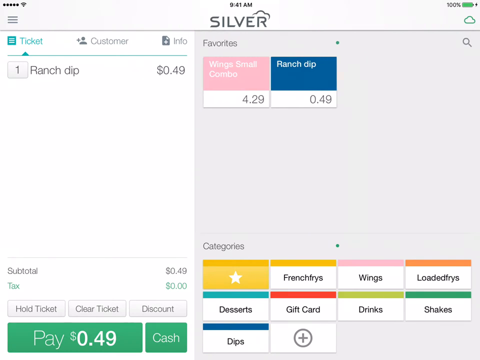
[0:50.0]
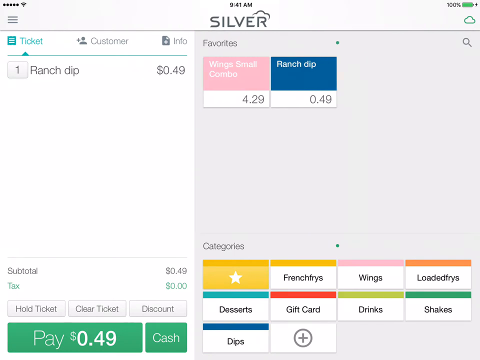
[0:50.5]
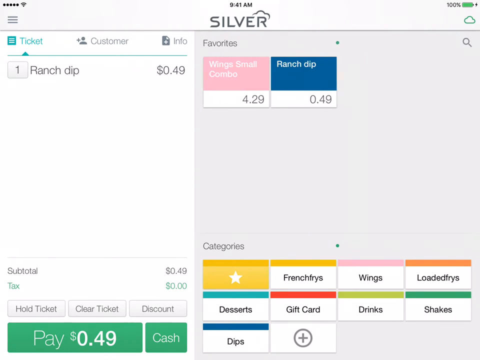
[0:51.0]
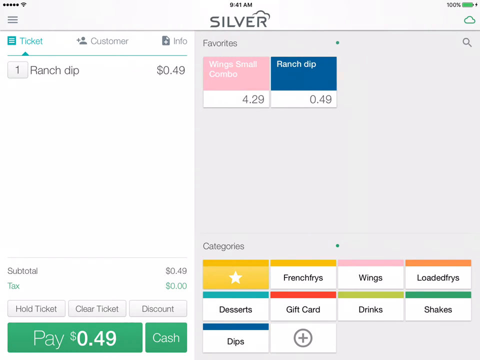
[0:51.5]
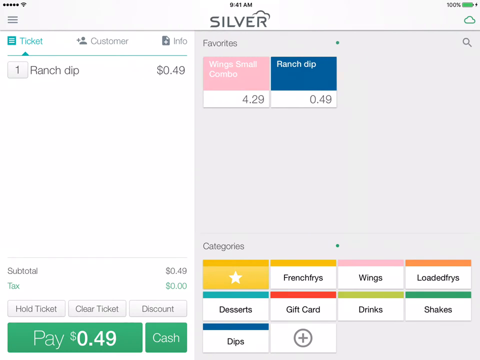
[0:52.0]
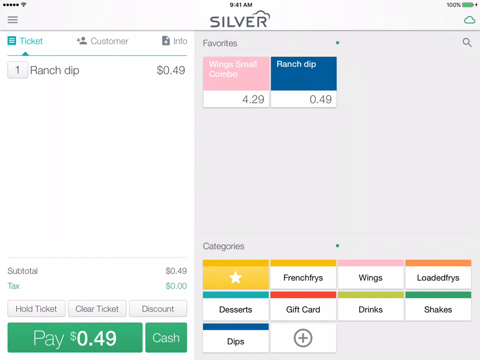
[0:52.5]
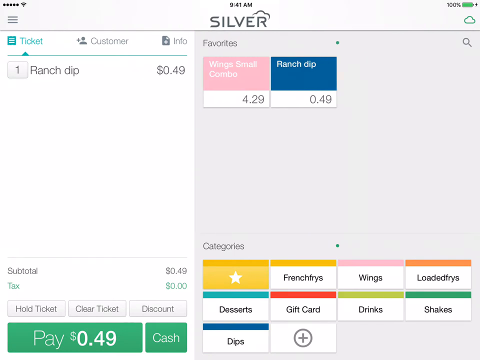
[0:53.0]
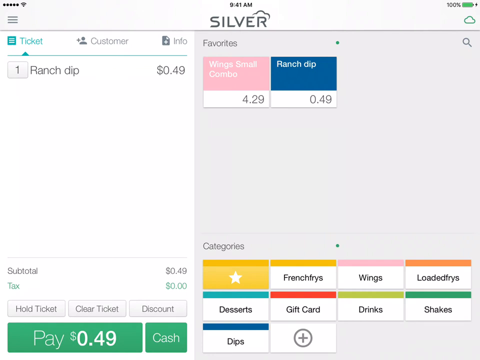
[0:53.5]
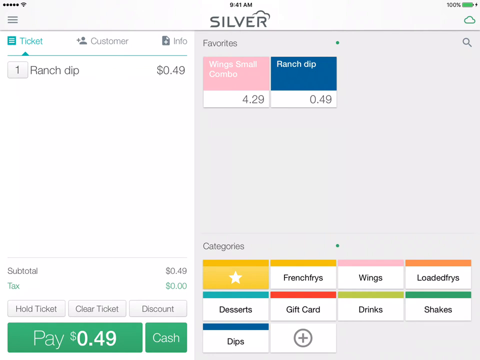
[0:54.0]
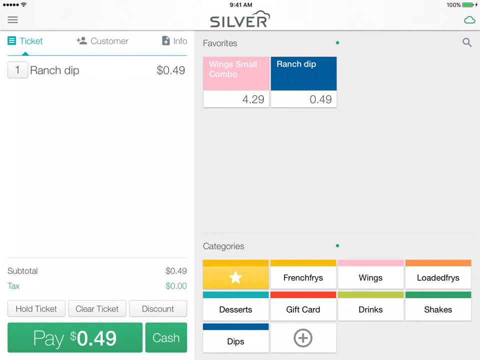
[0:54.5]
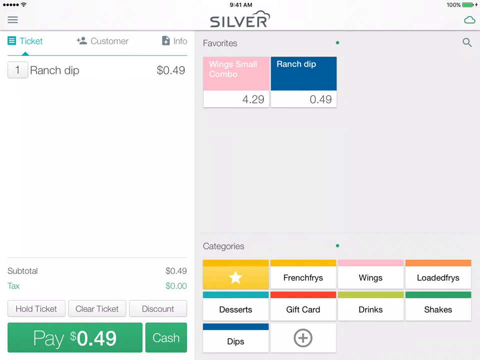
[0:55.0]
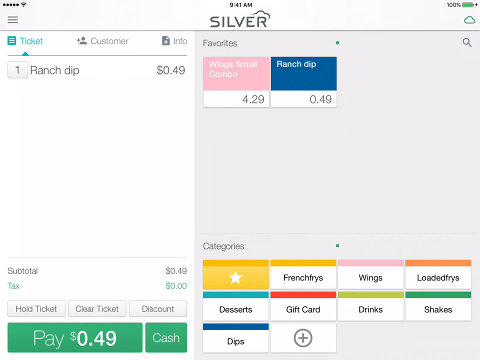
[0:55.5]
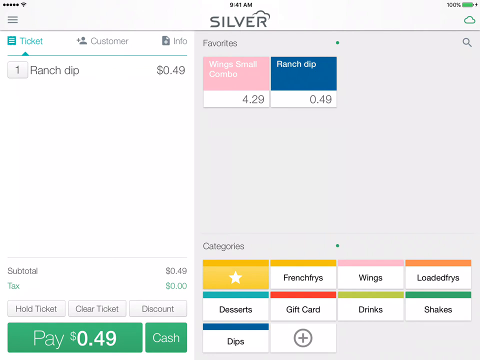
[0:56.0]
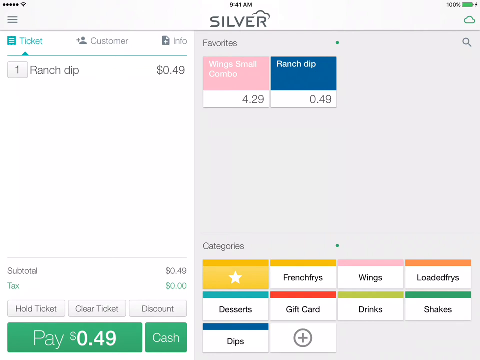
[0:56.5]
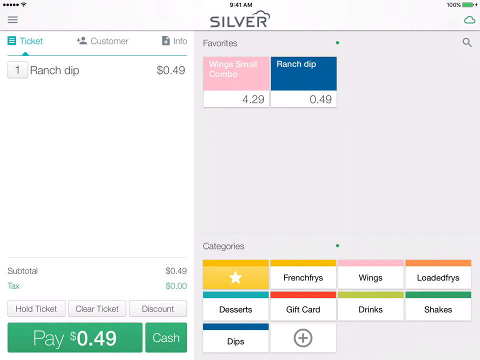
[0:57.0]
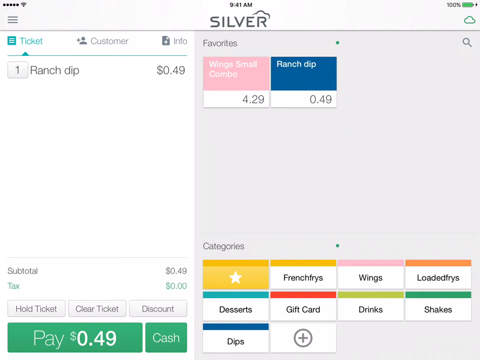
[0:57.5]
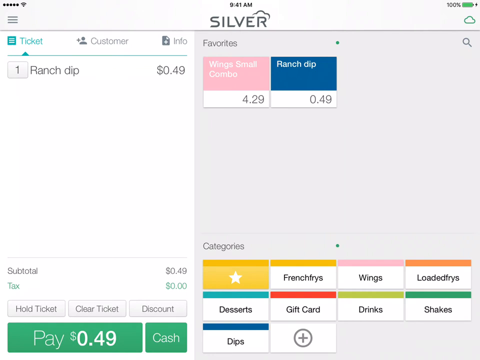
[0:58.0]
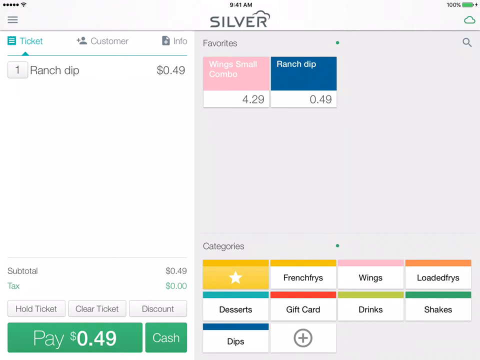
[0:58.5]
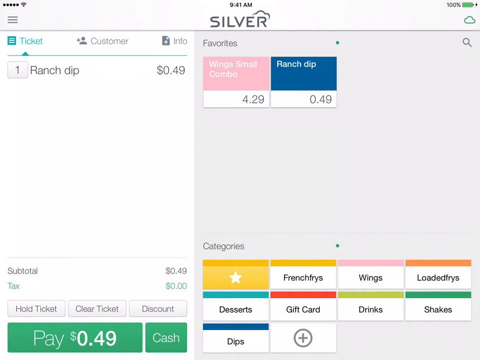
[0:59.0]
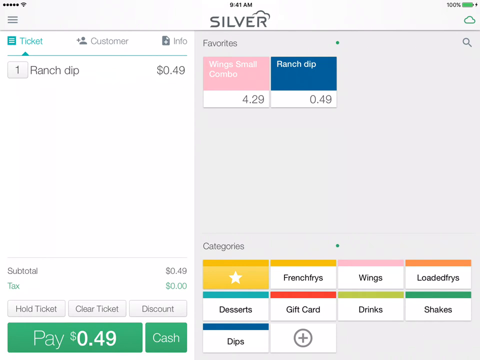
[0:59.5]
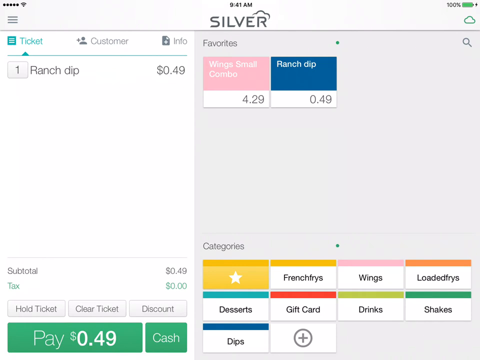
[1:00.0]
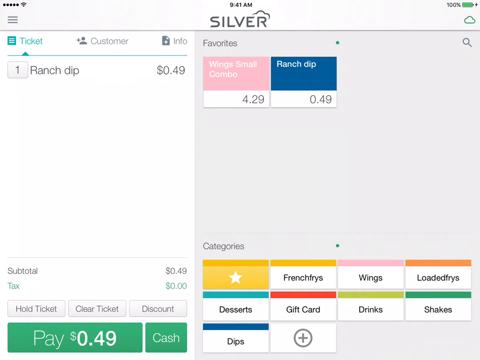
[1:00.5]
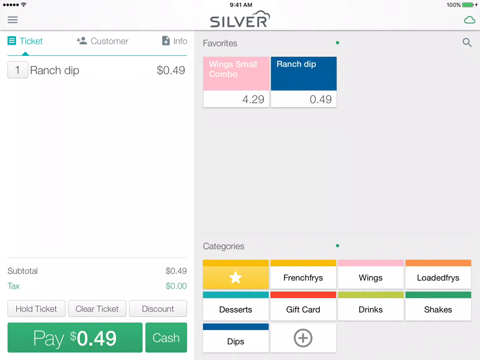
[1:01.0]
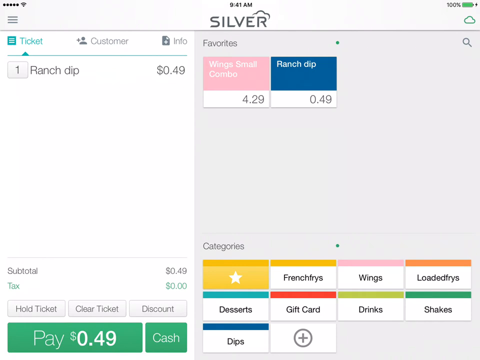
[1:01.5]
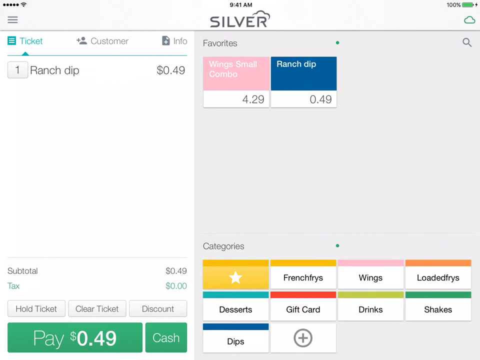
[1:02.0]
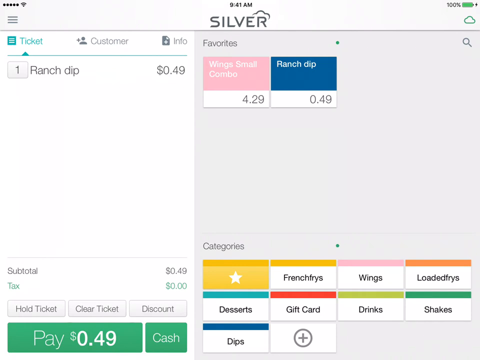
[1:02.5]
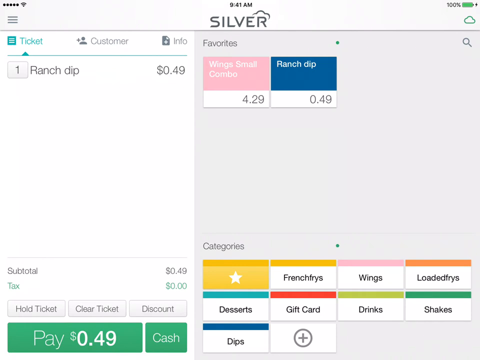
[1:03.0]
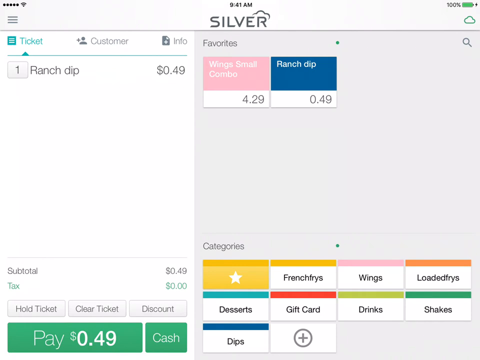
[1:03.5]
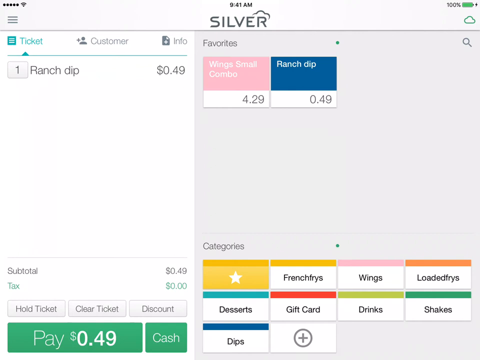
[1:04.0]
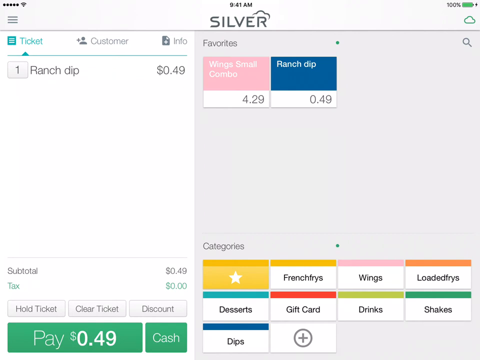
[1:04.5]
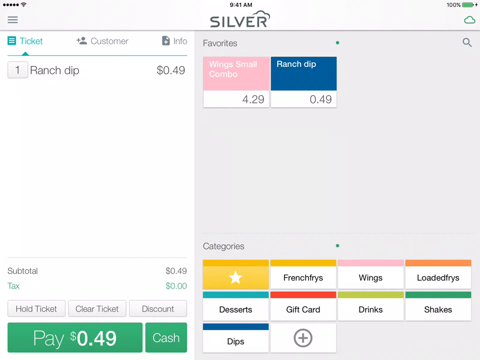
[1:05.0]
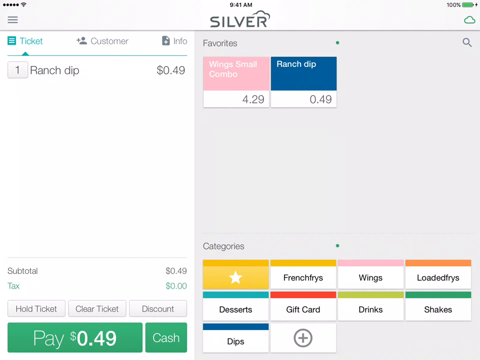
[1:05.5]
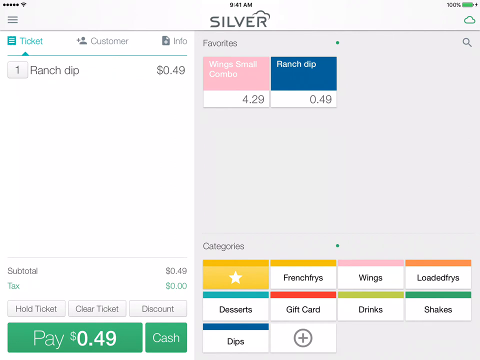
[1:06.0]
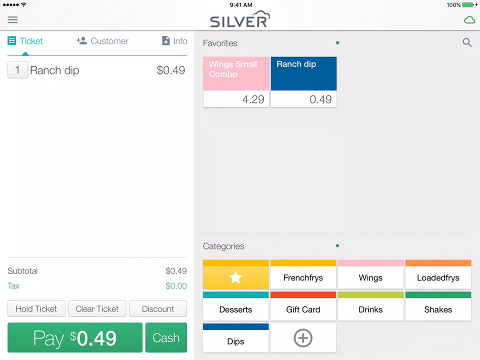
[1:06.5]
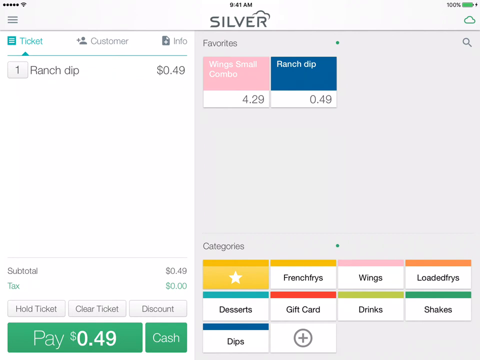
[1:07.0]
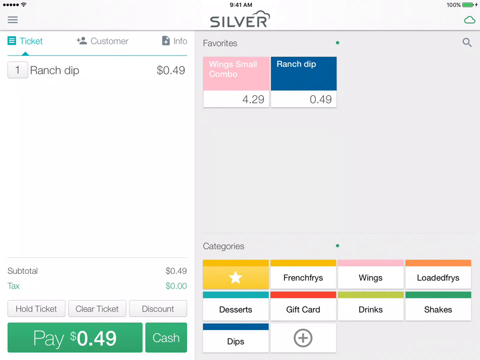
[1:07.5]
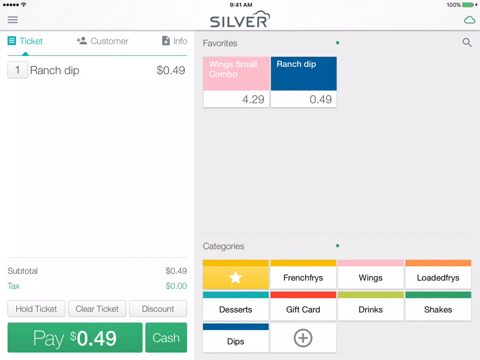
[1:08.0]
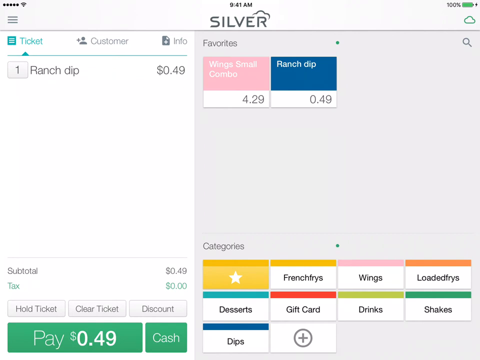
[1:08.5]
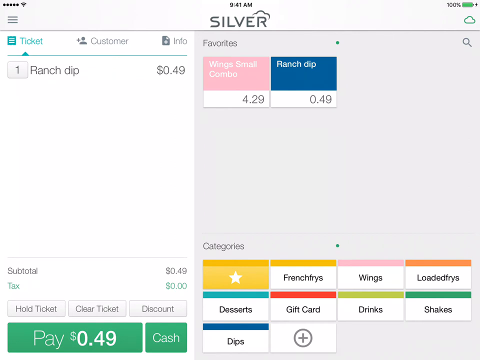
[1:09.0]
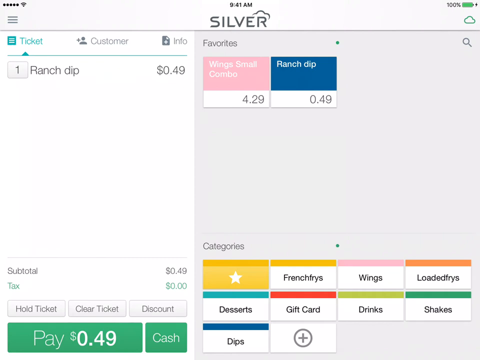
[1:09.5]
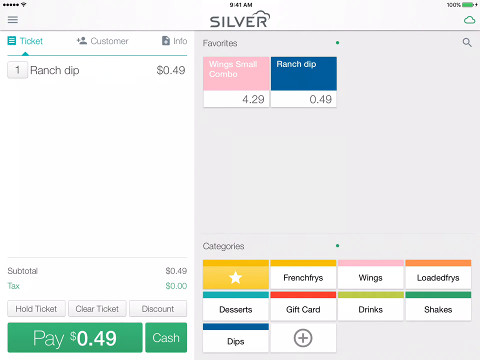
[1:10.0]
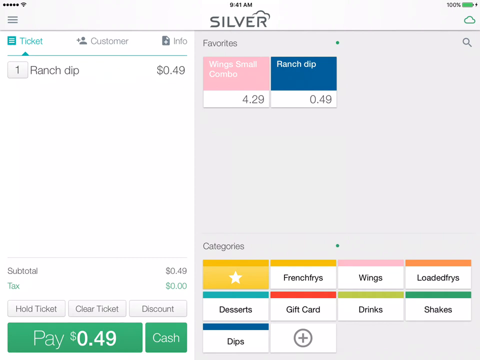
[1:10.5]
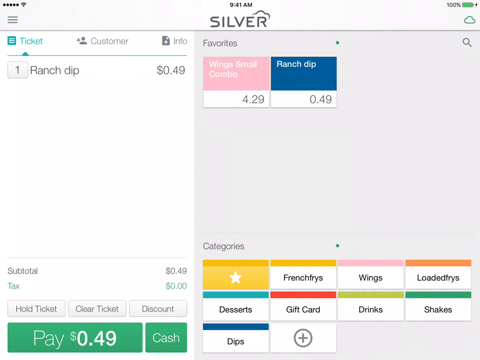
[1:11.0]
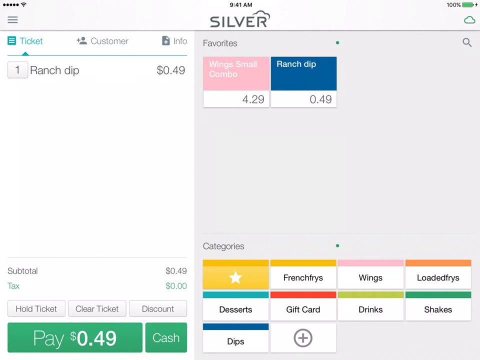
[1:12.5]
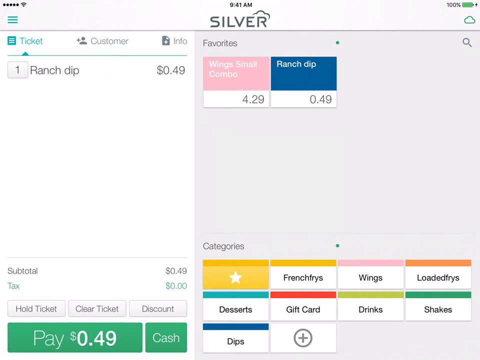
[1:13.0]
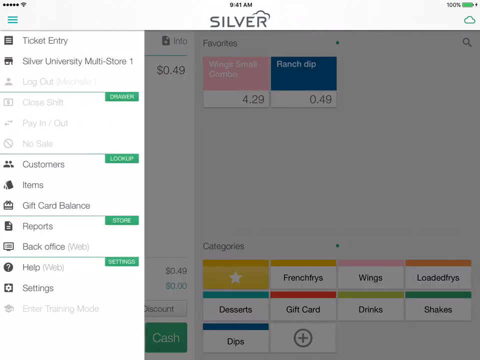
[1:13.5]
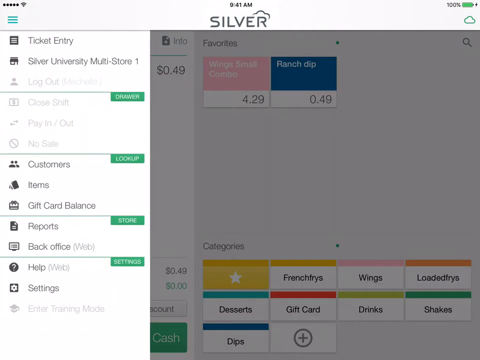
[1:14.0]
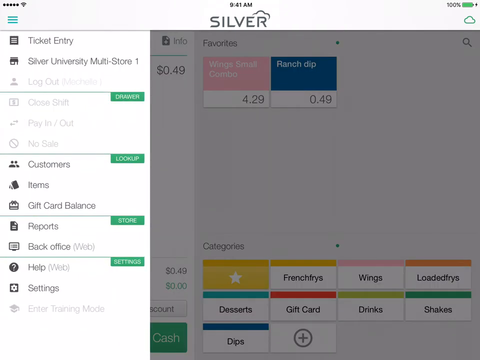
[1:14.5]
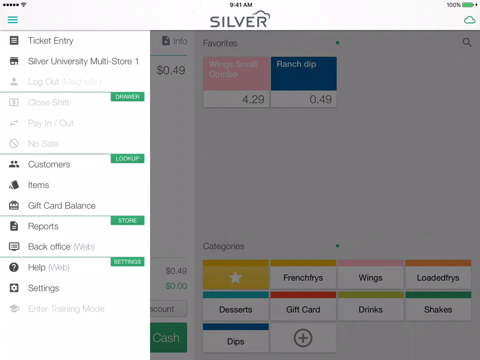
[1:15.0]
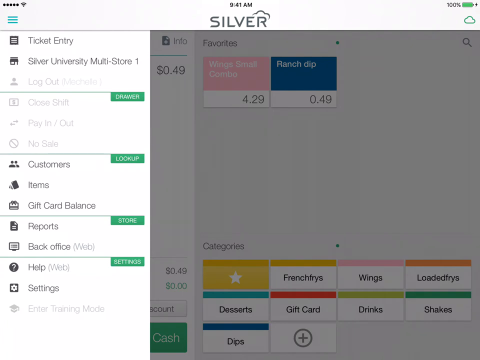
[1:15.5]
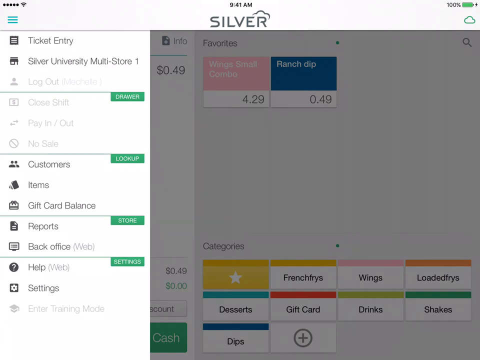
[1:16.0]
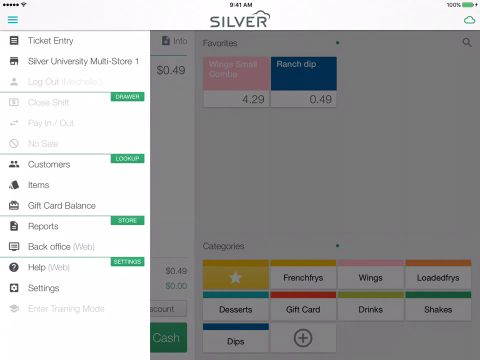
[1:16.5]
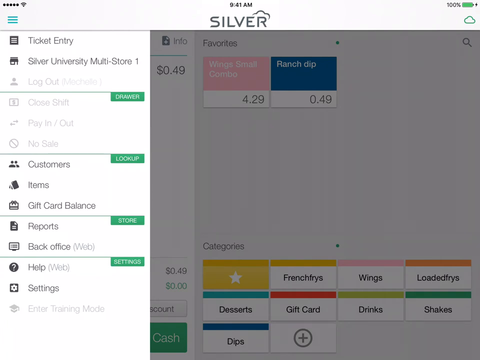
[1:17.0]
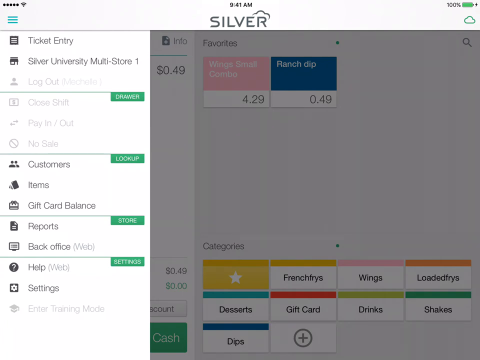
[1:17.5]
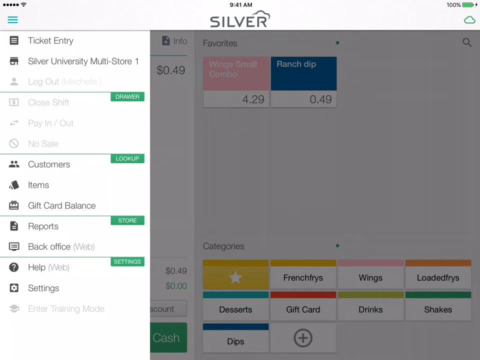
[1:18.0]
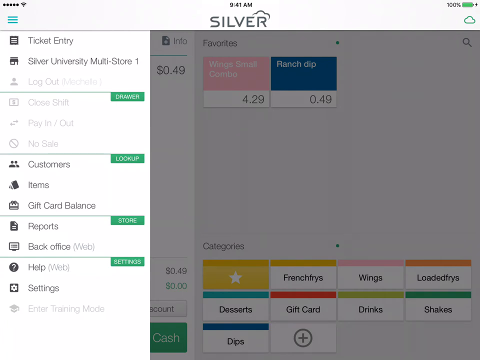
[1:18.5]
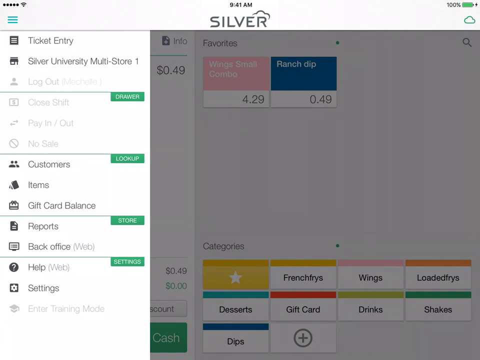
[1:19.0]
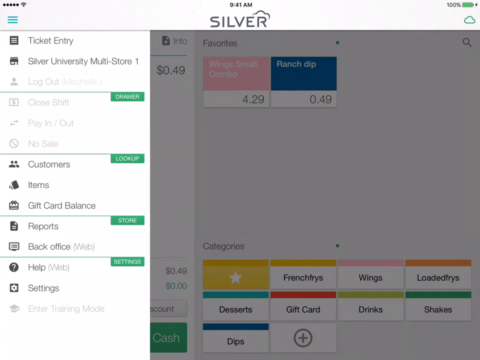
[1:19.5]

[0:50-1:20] In the Silver ordering software, the screen shows what is sort of the main menu page, where the customer has ordered one ranch dip for $0.49, with no other items; that is the subtotal, and there is no tax. A big green button at the bottom reads "pay now". On the right side is the field with all of the menu categories, the types of food available. The wings small combo and the ranch dip are now in the favorites, a largely empty field at the top, with all sorts of categories below it. The screen stays like this for several seconds with little movement, and no cursor is visible. After a few seconds the user appears to click the three horizontal bars at the top left, and a pull-down menu with several options comes in from the left side of the screen toward the right: ticket entry at the top, Silver University Multi-Store 1, a grayed-out log out option, and all sorts of other options.